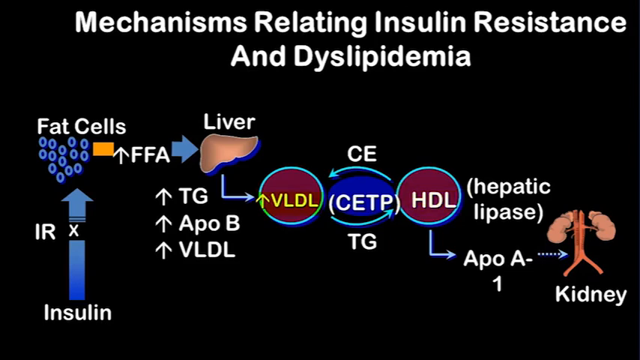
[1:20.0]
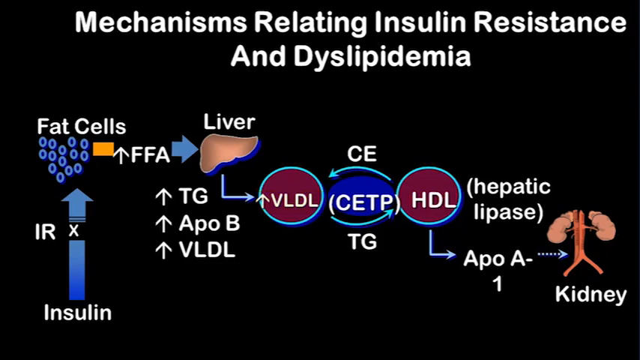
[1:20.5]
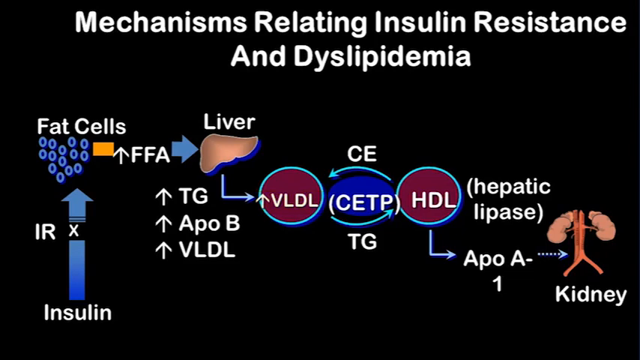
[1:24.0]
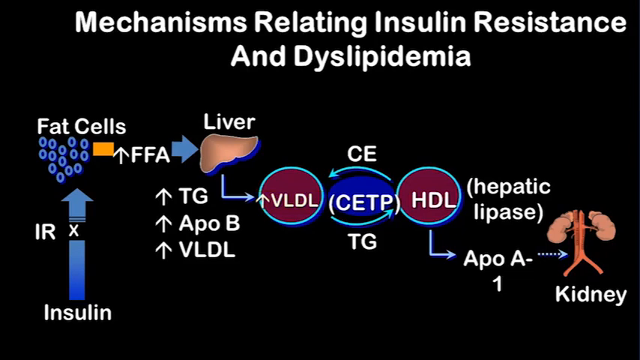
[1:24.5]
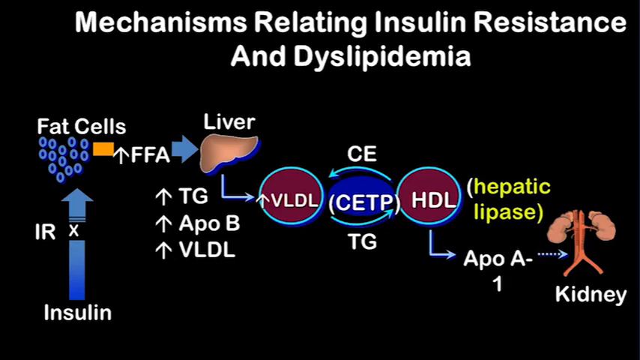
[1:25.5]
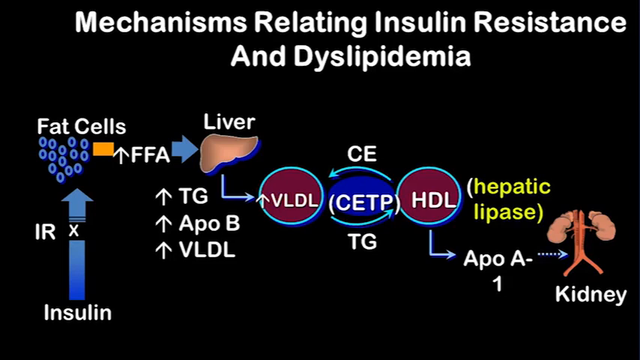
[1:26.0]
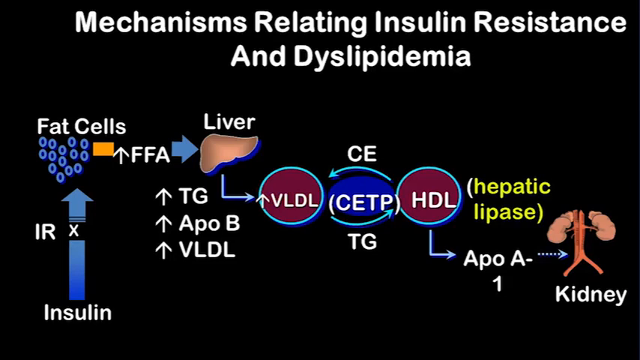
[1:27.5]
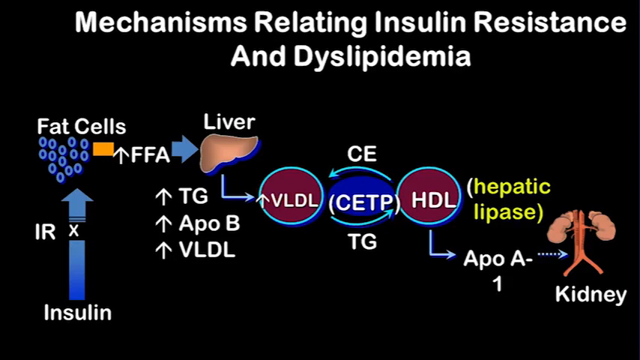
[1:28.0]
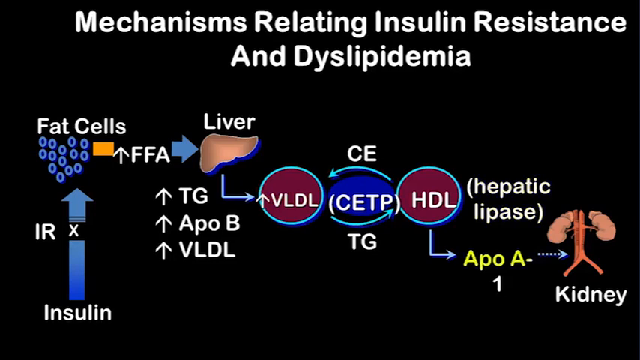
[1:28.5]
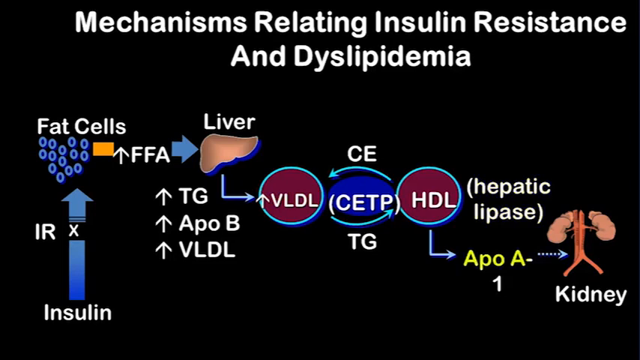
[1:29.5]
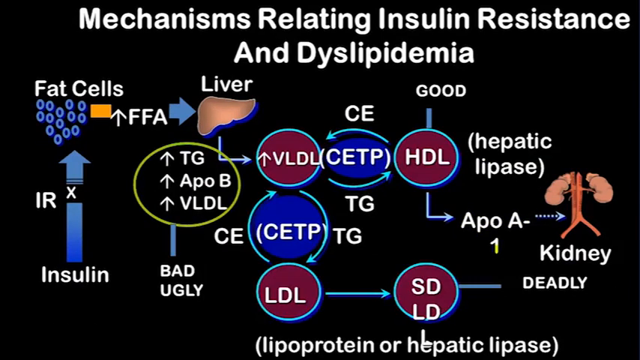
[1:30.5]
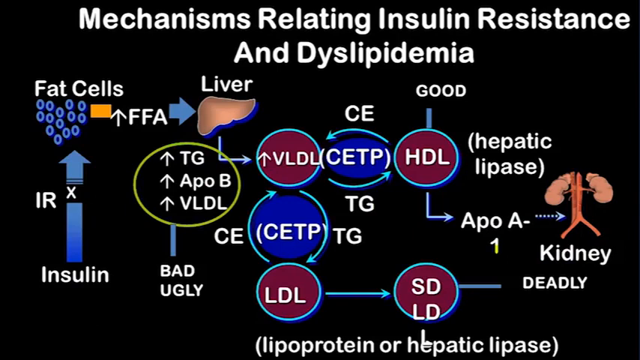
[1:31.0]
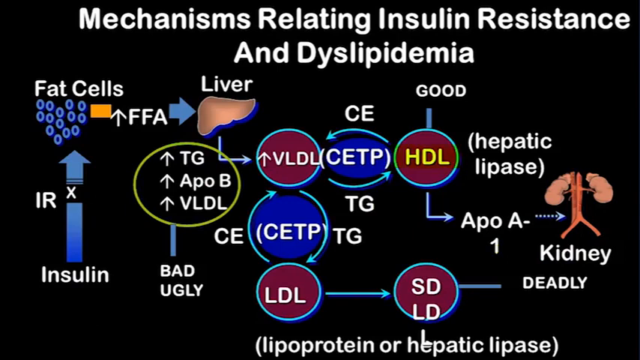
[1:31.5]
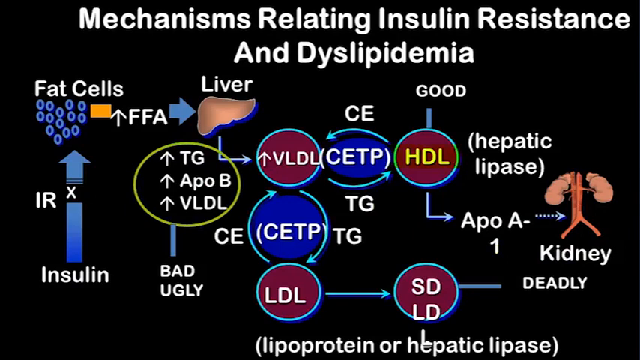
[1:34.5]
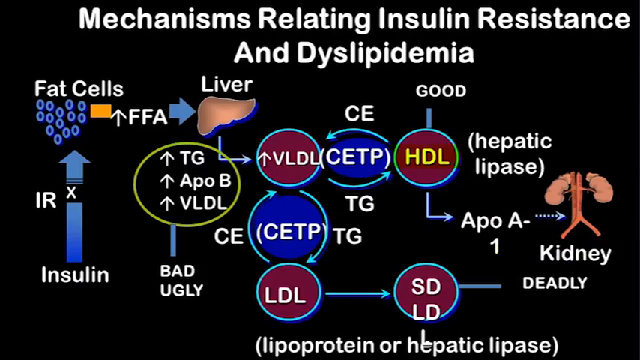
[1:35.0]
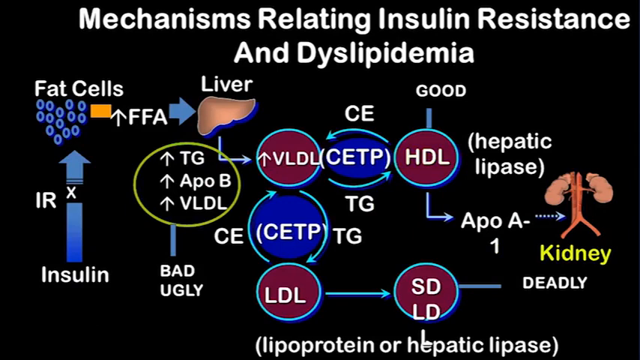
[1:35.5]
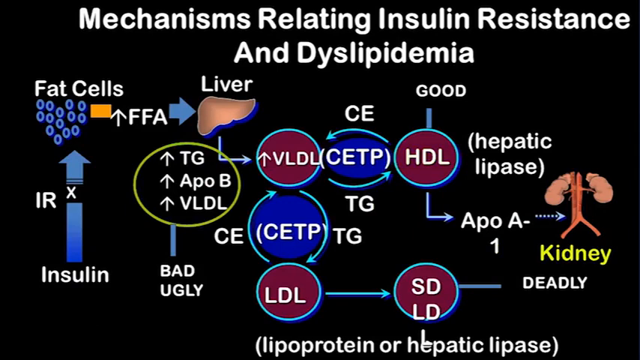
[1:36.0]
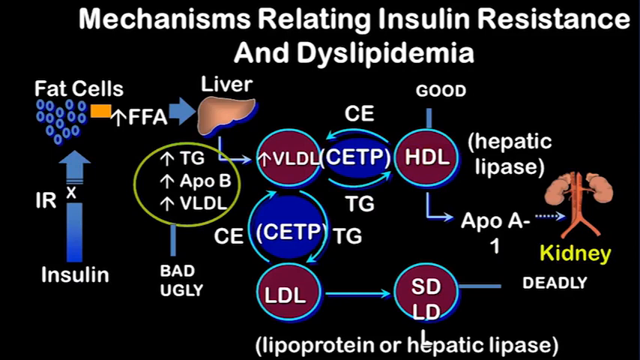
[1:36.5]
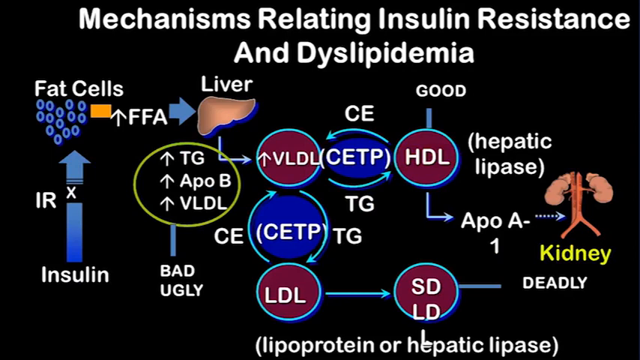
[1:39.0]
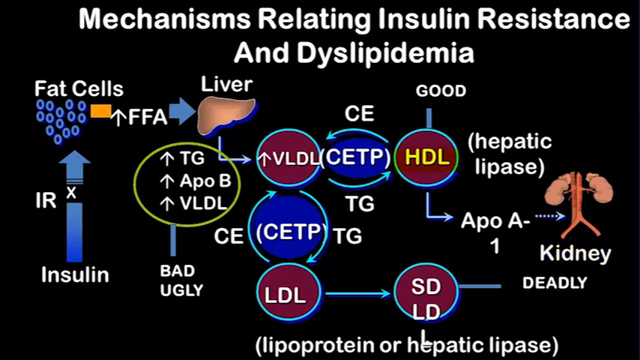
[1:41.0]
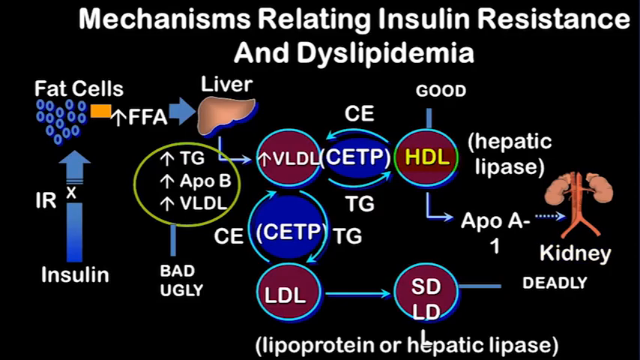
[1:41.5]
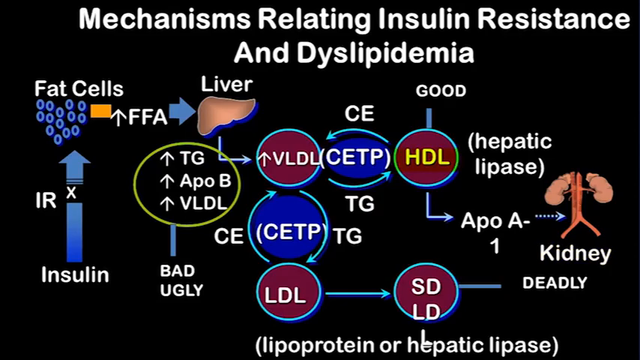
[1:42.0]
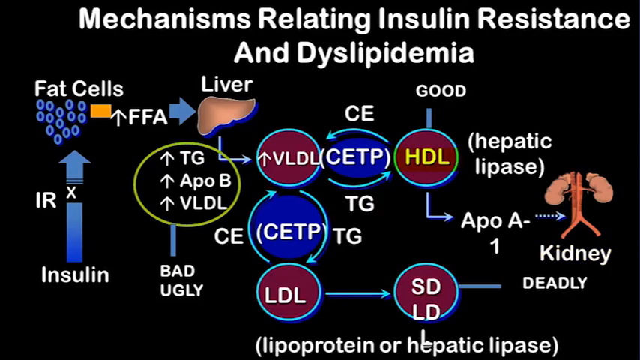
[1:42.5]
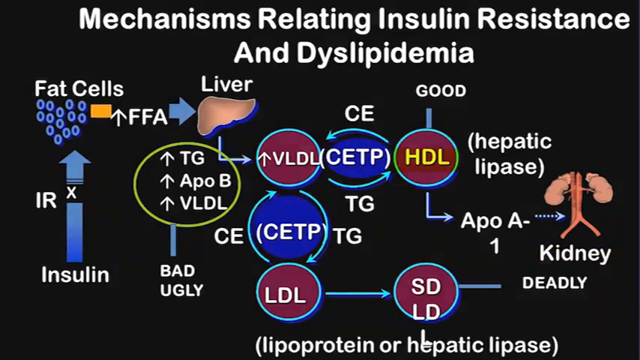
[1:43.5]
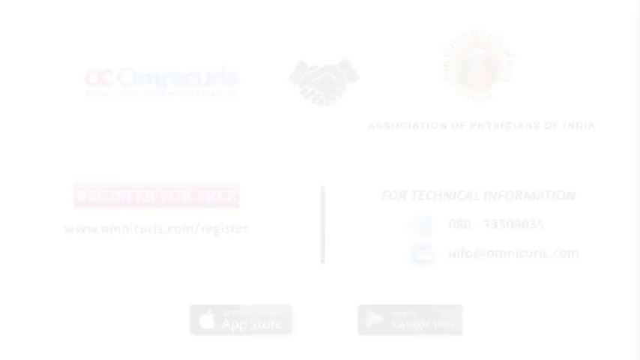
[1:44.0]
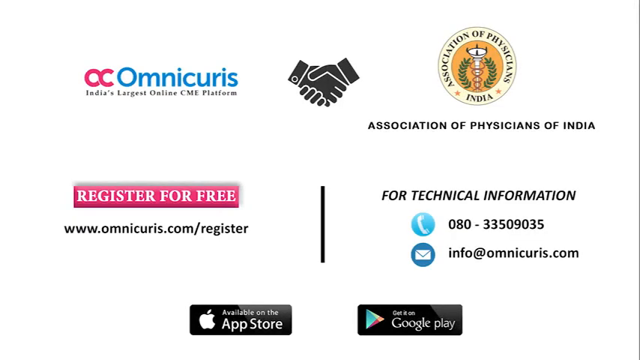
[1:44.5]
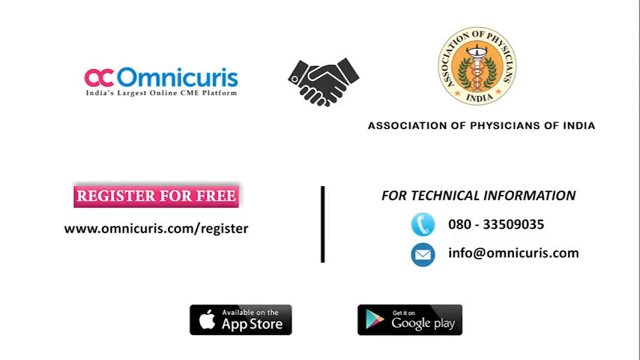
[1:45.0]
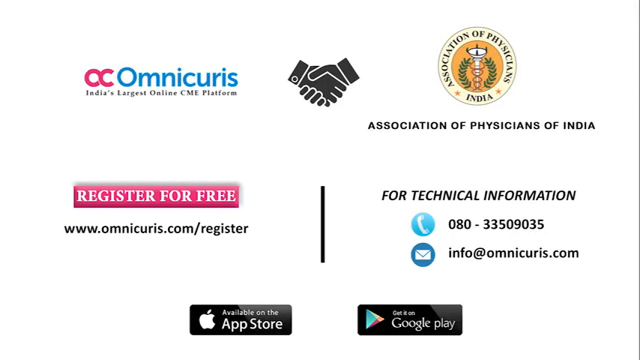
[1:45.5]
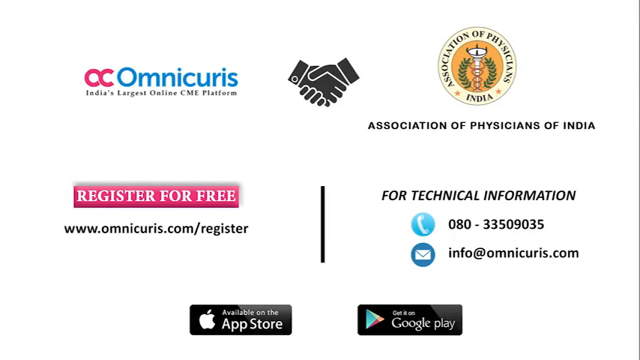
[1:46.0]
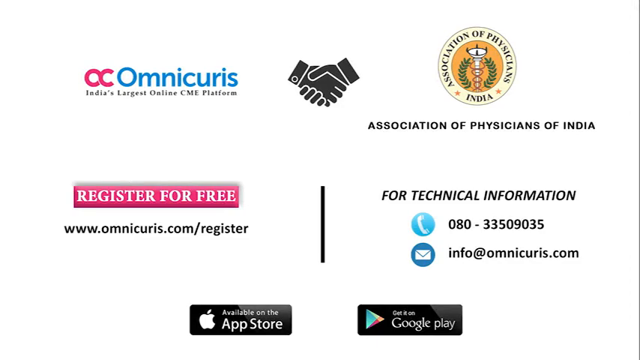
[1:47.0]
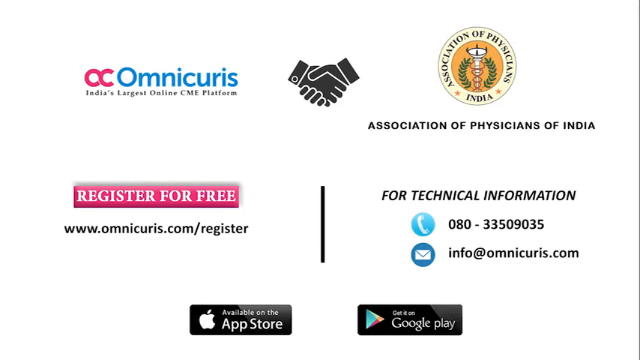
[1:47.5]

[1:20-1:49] The same pathway continues, but with some parts highlighted. The liver is shown as an icon that looks like a liver, with its lower portion highlighted in blue. The focus moves to the section from the liver to the kidney: in the middle of this stretch, CETP is highlighted in blue and goes around in a sort of circle, and the arrow from the term "APOA-" pointing to the kidney is highlighted as well. Later, the pathway extends further, with labels reading "bad," "ugly" and "deadly," apparently an alternative, negative pathway. The video ends with credits.